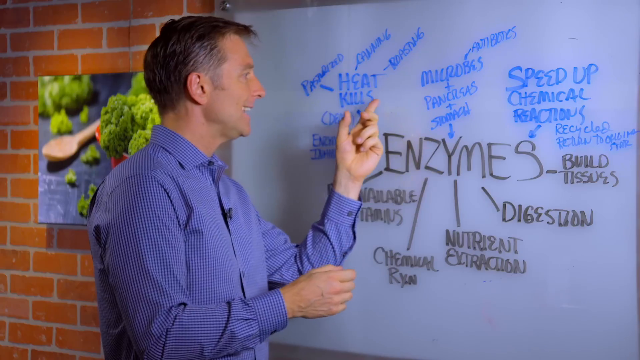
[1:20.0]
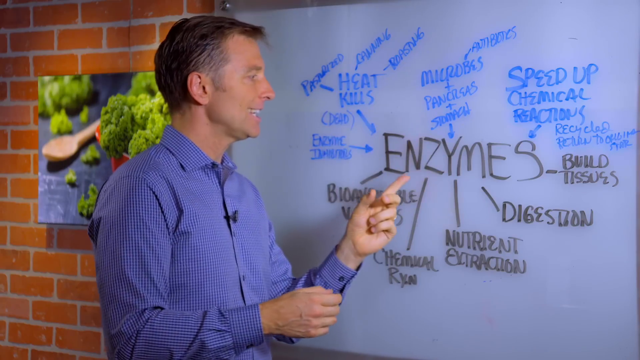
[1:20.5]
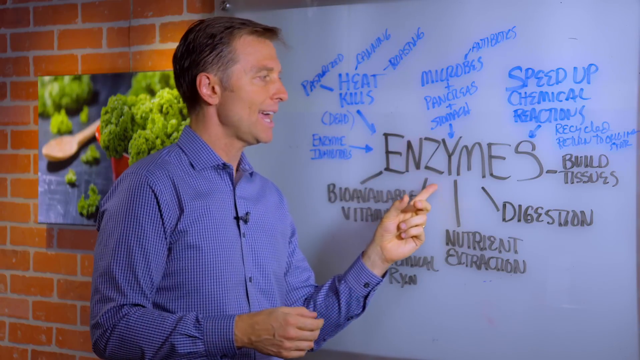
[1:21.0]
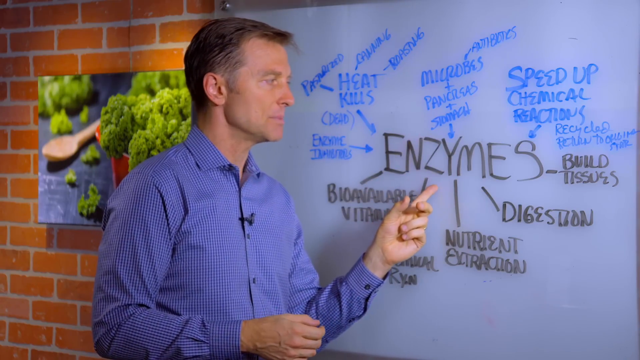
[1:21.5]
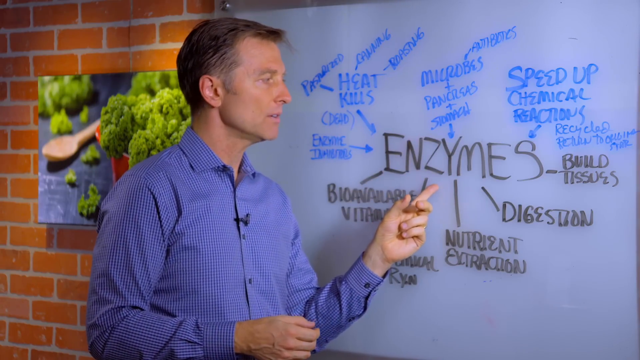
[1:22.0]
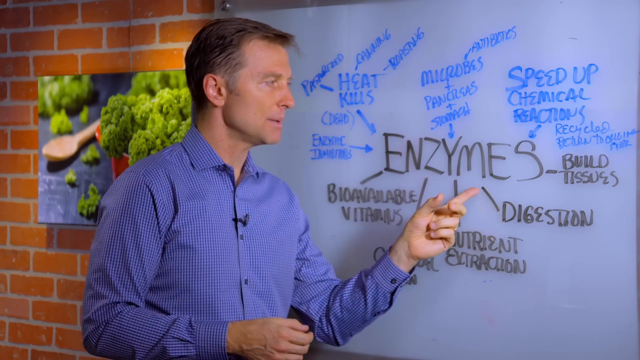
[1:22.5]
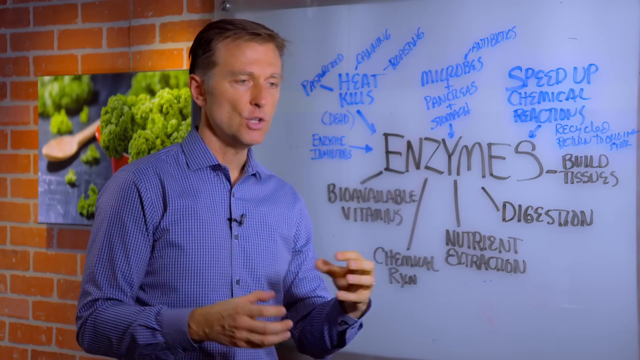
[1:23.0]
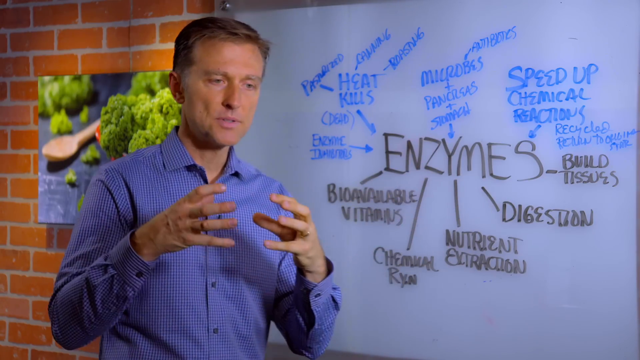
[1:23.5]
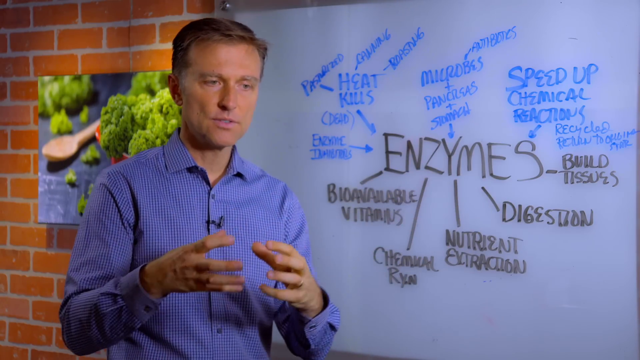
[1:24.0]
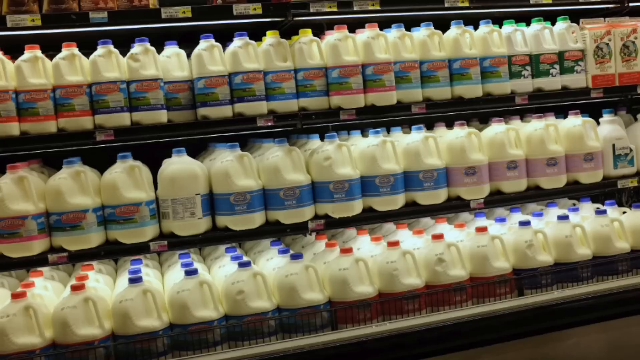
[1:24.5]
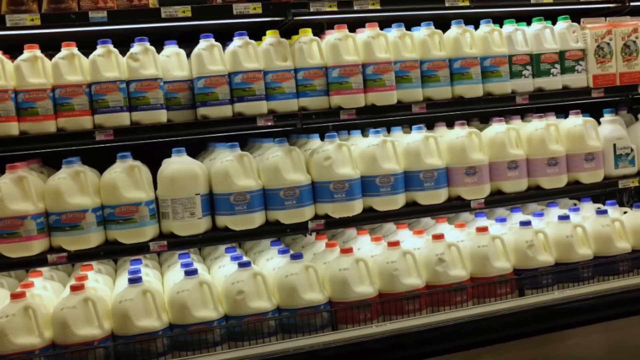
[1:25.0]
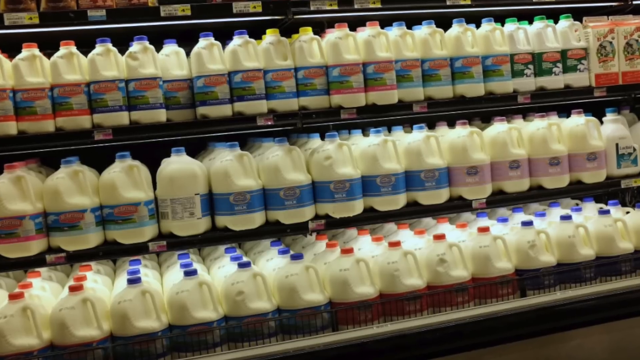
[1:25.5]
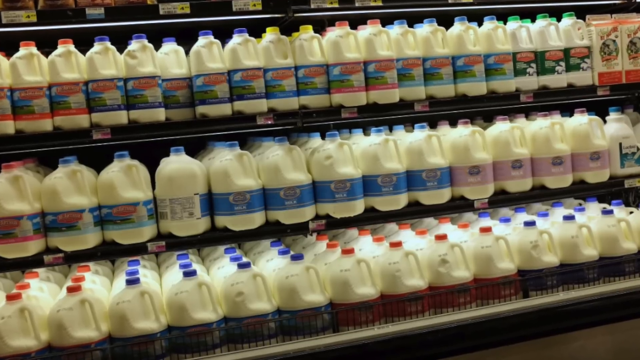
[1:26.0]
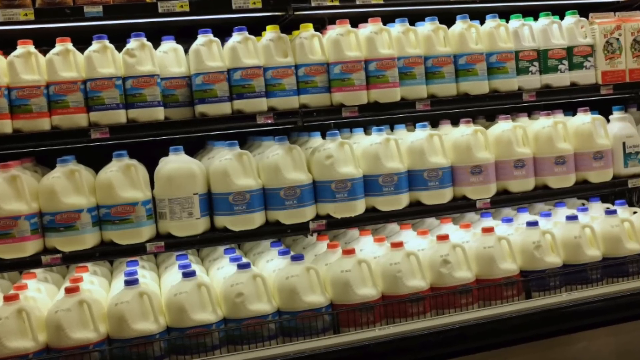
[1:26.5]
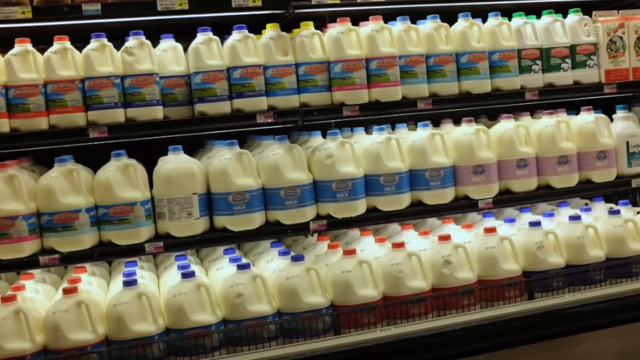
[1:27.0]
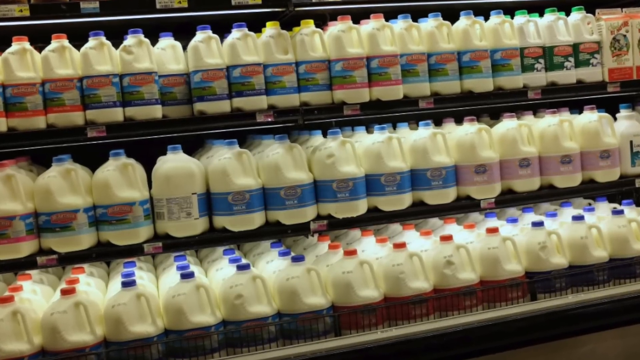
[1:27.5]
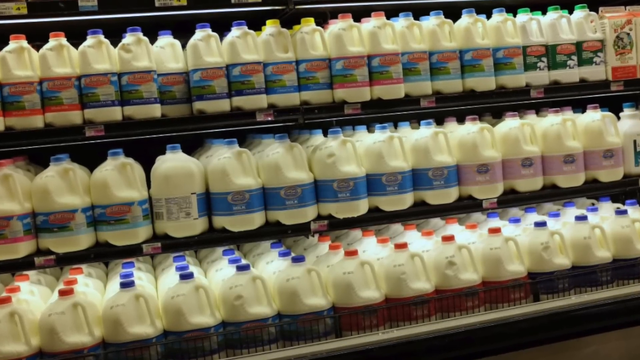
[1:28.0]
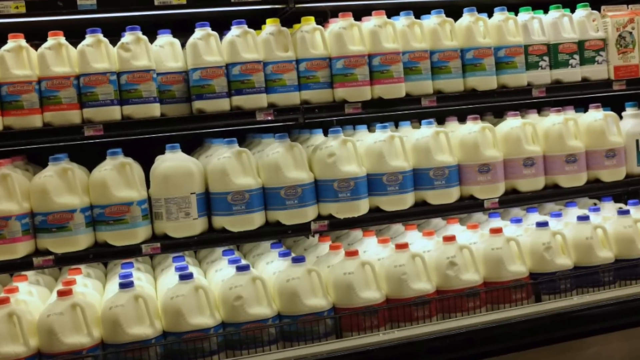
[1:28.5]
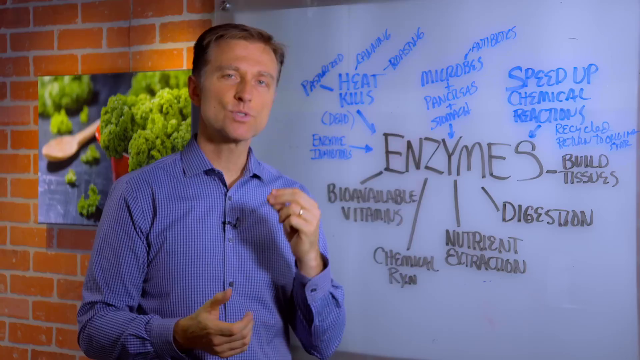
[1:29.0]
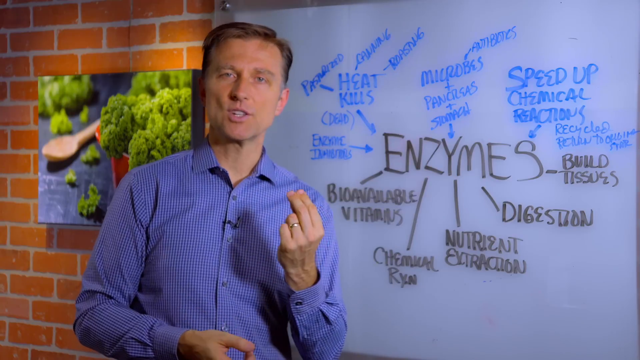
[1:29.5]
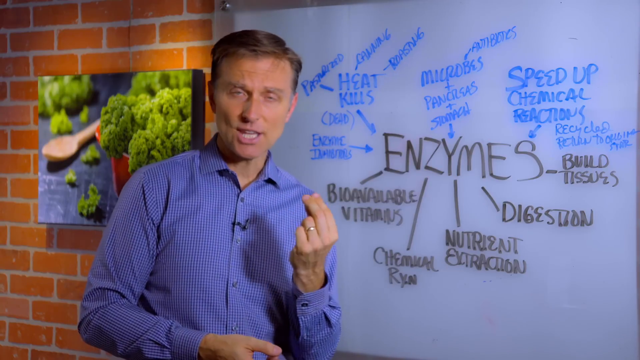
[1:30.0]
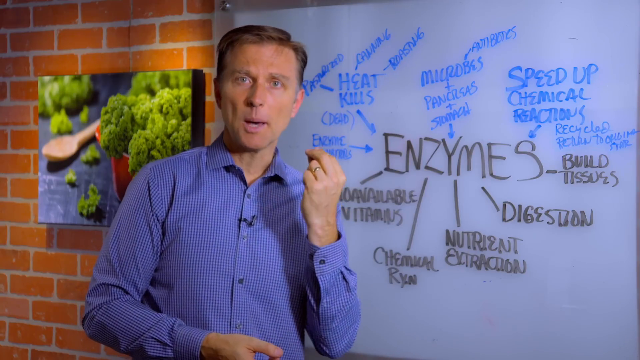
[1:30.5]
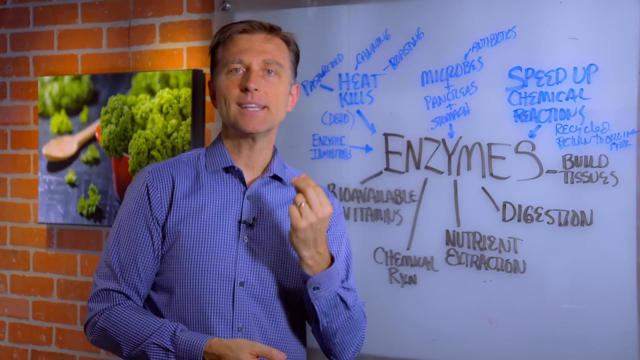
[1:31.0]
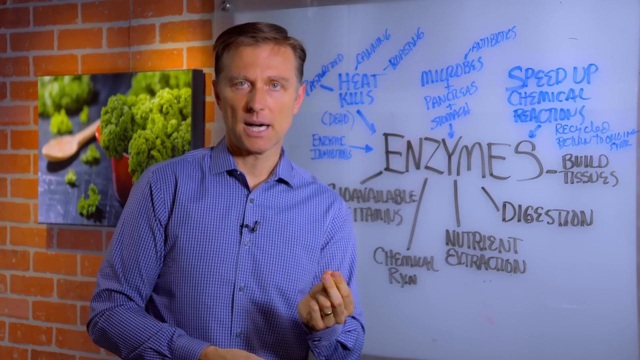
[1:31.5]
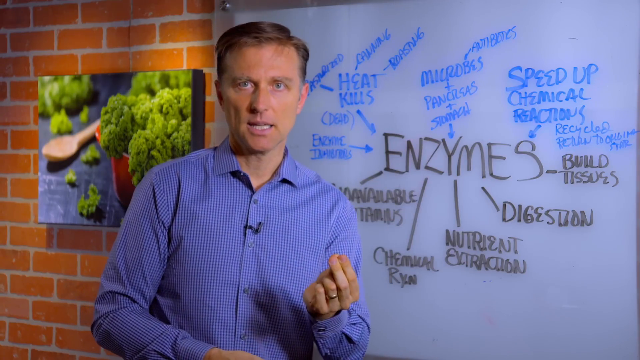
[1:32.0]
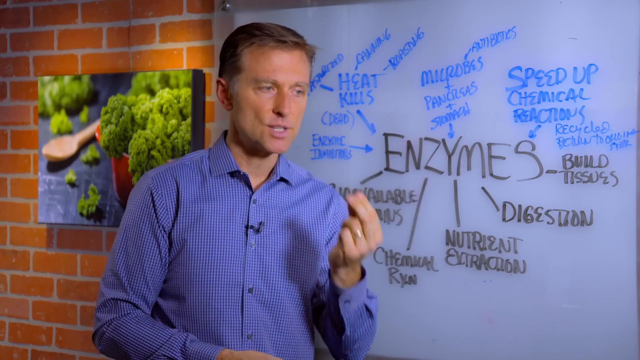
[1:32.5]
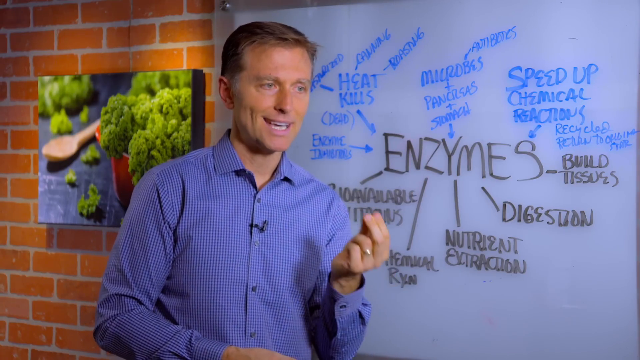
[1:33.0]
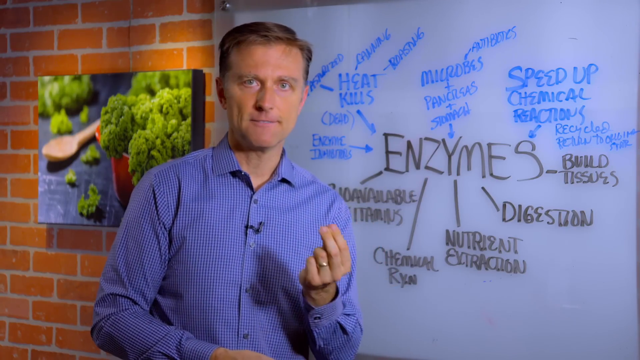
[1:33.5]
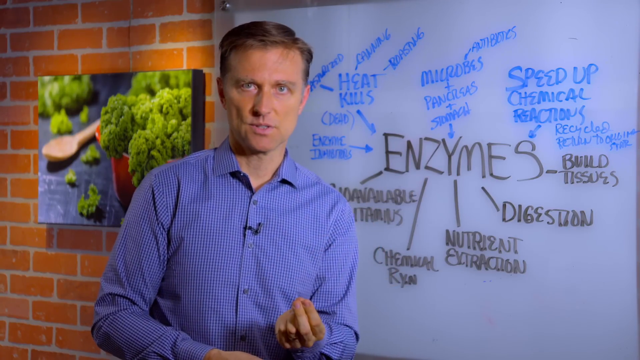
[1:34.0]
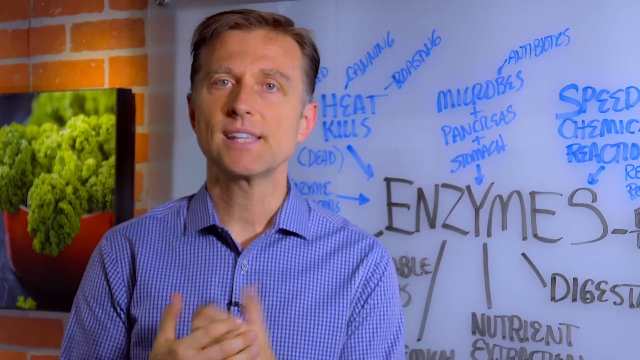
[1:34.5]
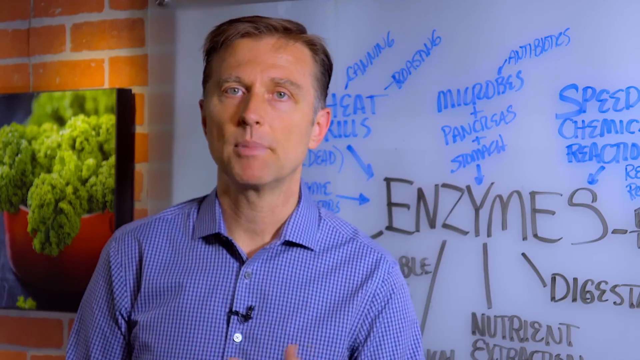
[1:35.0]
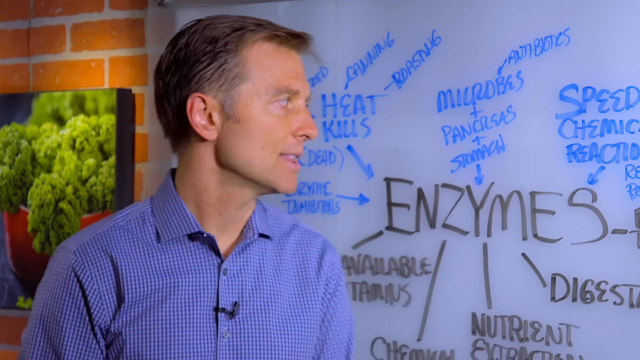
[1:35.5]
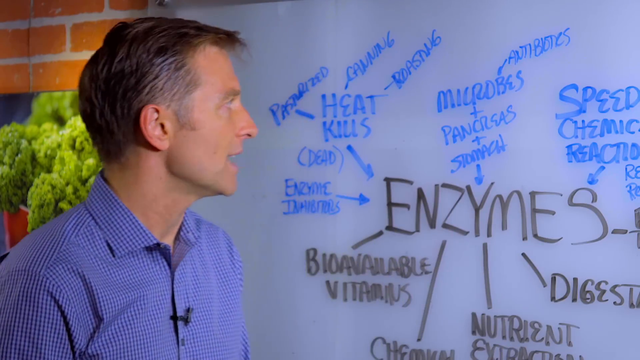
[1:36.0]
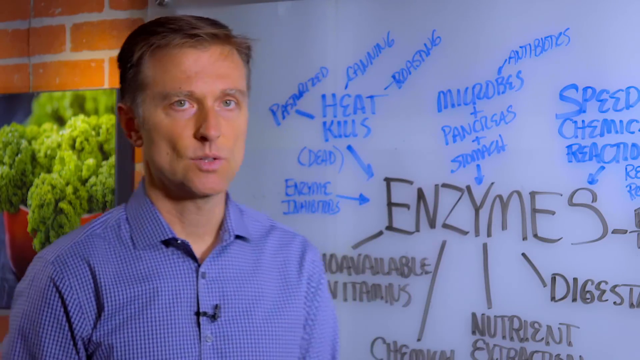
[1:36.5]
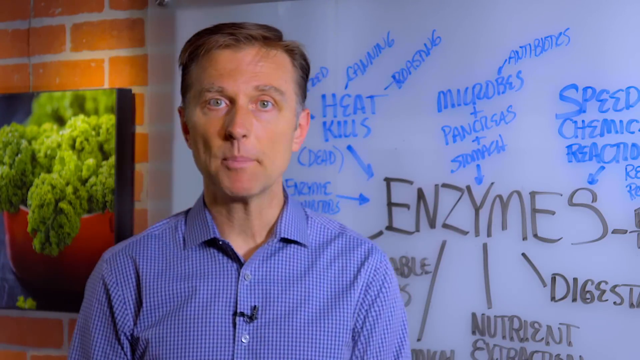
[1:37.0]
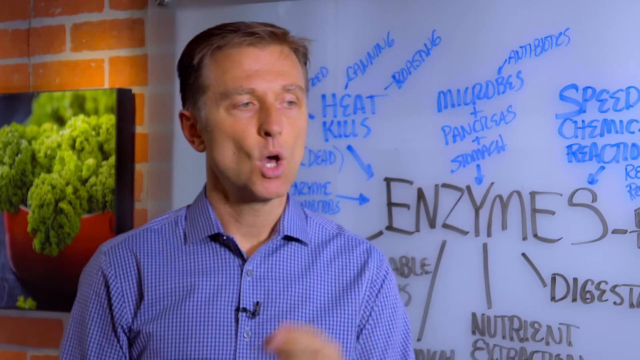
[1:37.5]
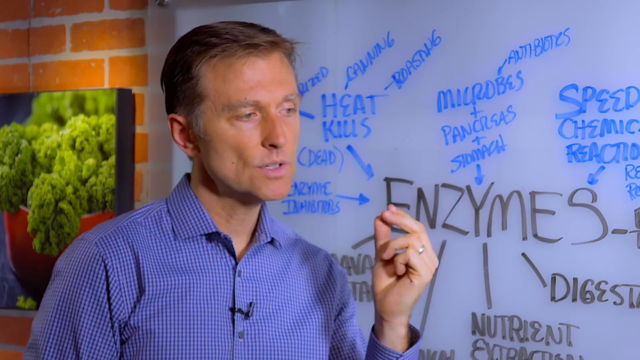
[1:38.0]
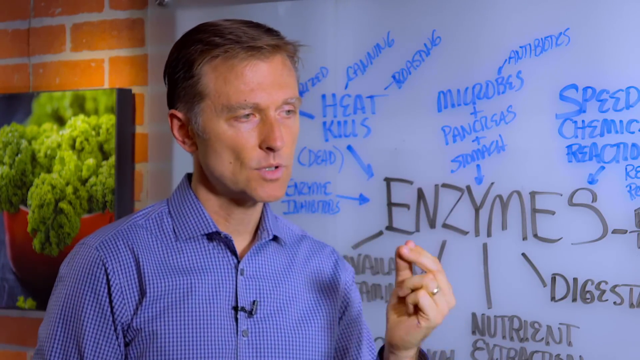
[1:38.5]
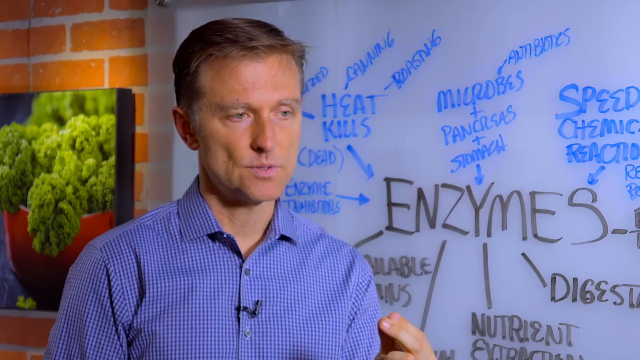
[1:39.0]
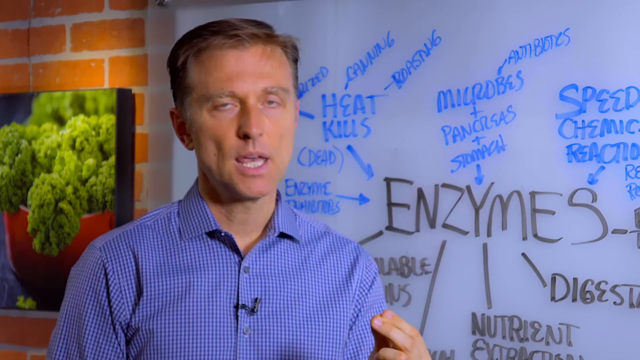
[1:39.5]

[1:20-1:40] The man, who was pointing to "heat kills", now points toward enzymes. The video then changes to a supermarket again, pointing toward many jugs of milk in what looks like a fridge. There are many kinds of milk, whole, semi-whole and non-fat, and many brands: some with a blue label, some with a pink label, others with a red label, and some with a yellow lid.